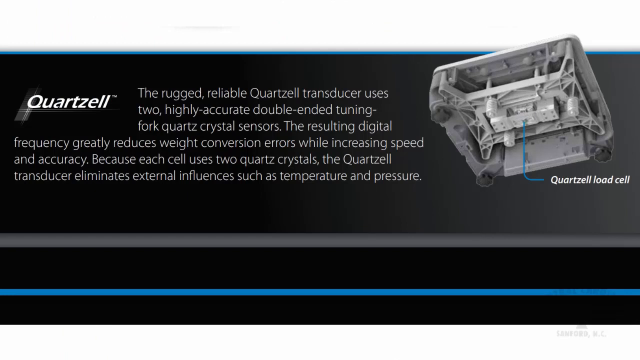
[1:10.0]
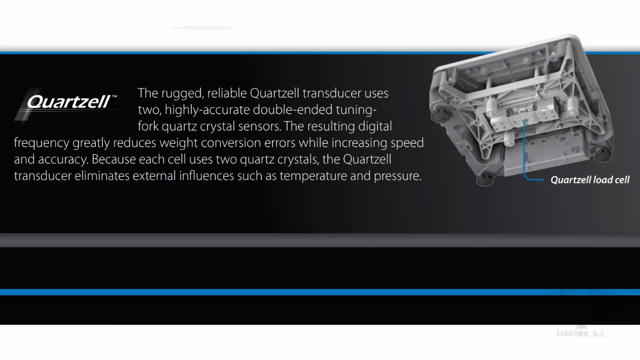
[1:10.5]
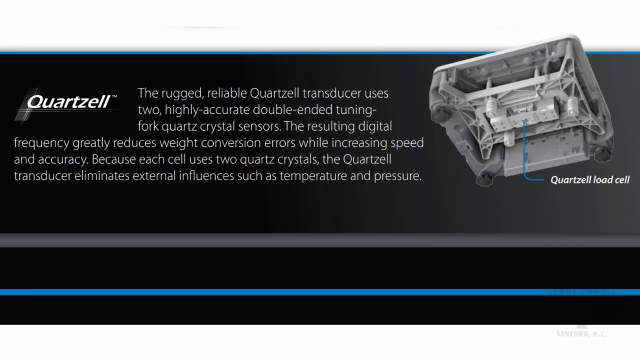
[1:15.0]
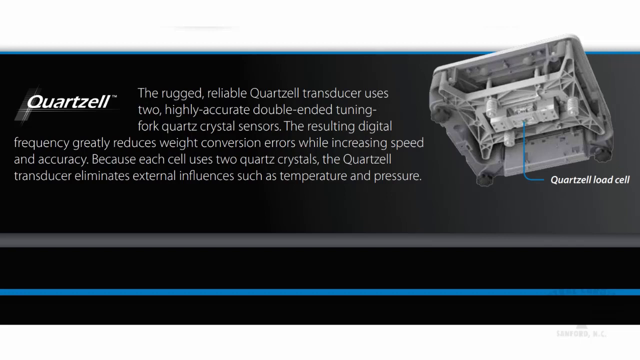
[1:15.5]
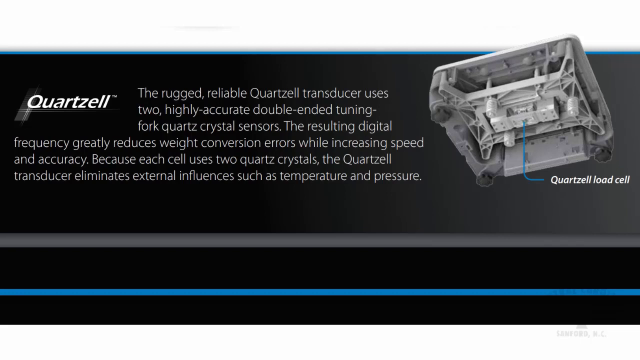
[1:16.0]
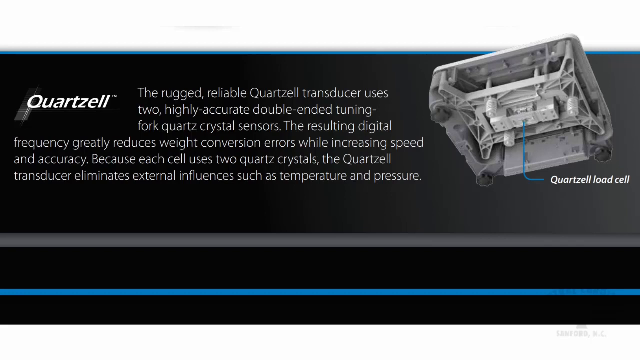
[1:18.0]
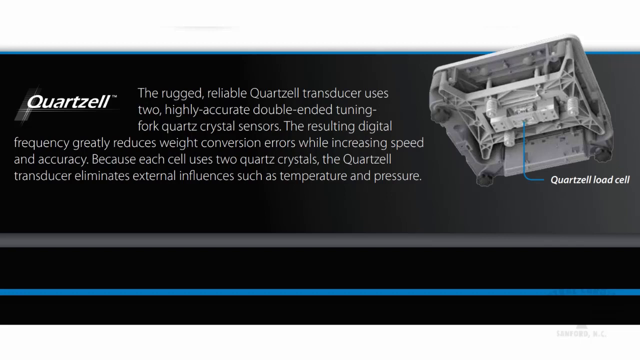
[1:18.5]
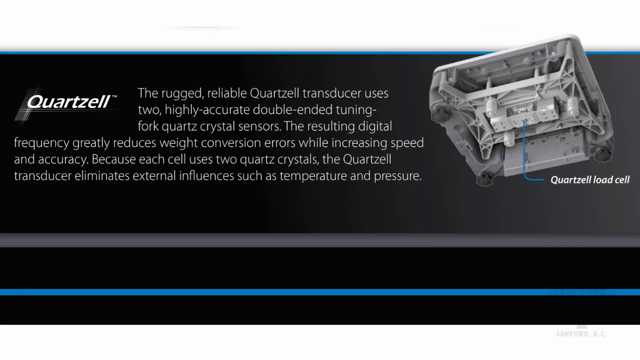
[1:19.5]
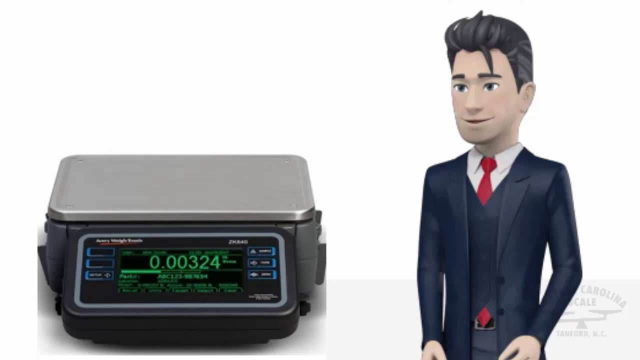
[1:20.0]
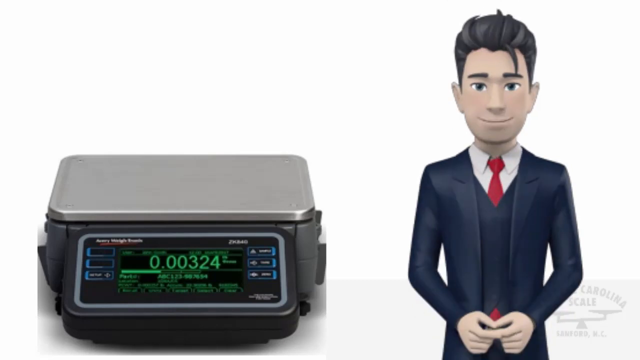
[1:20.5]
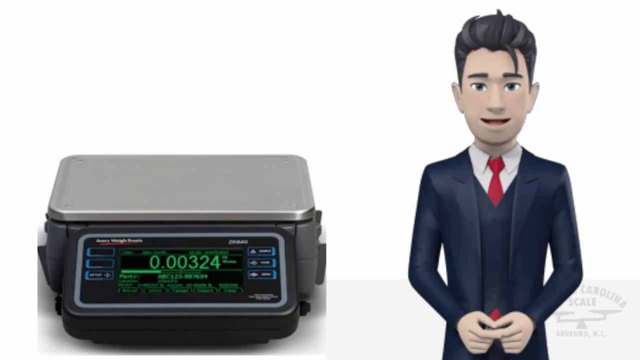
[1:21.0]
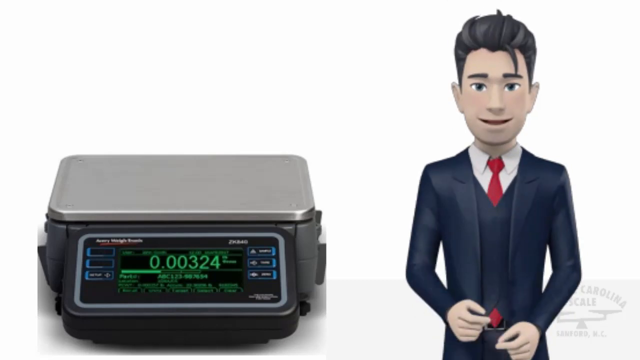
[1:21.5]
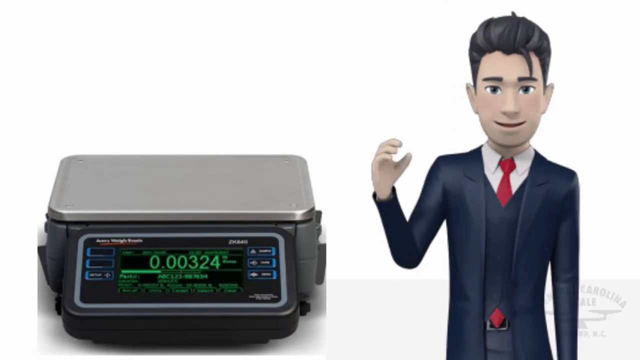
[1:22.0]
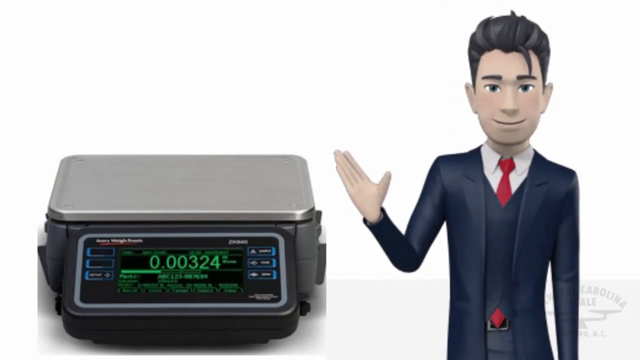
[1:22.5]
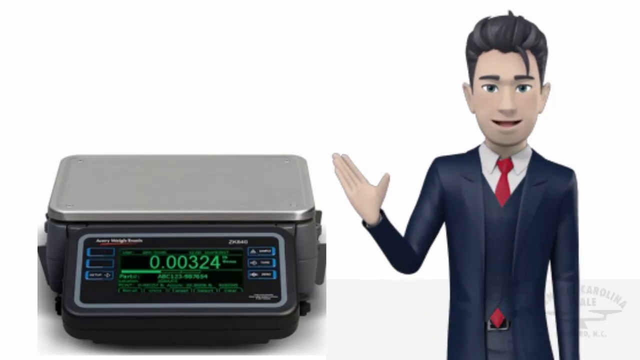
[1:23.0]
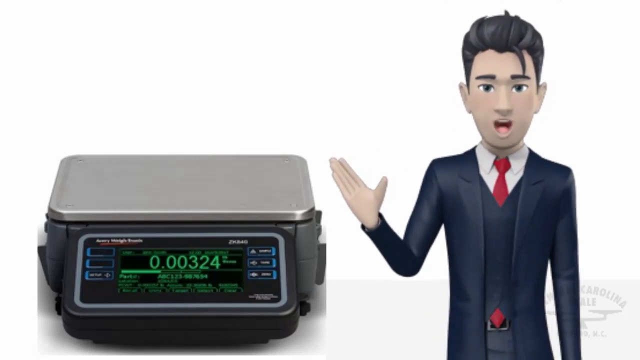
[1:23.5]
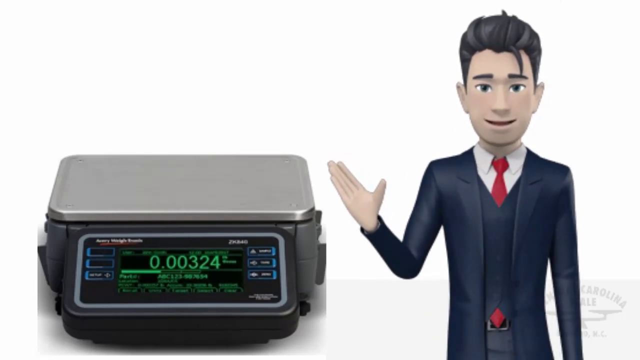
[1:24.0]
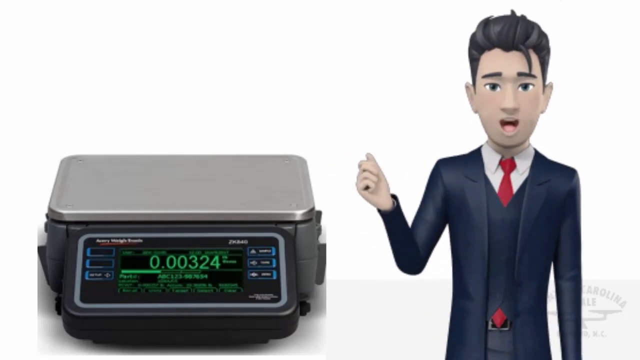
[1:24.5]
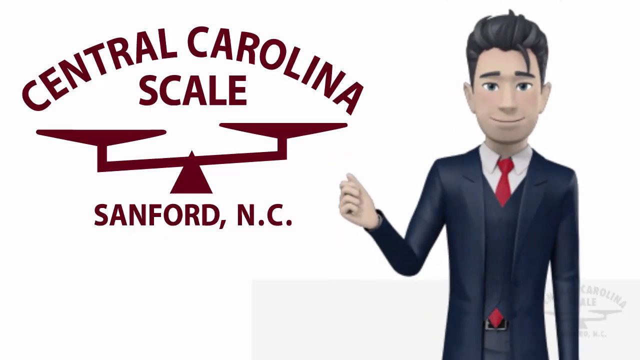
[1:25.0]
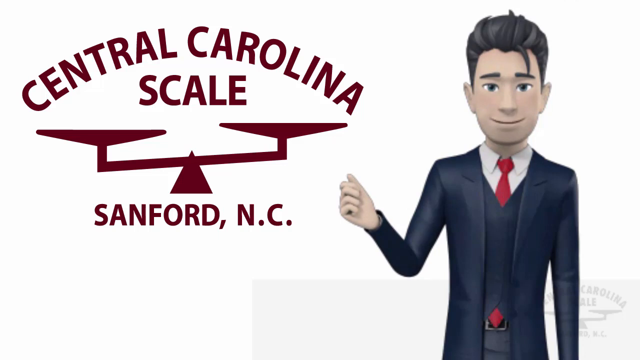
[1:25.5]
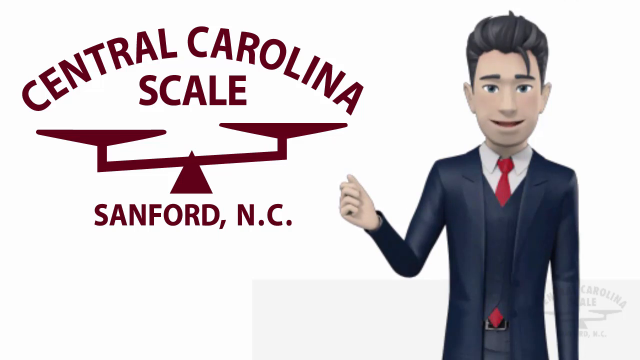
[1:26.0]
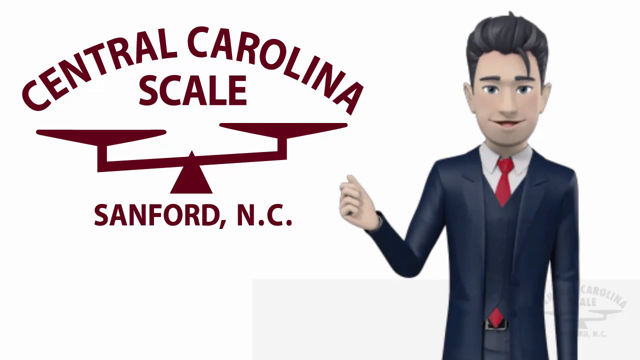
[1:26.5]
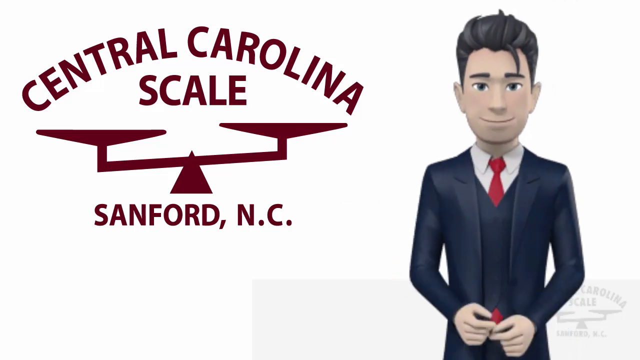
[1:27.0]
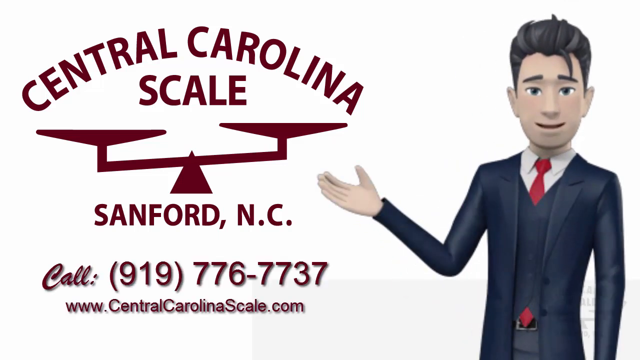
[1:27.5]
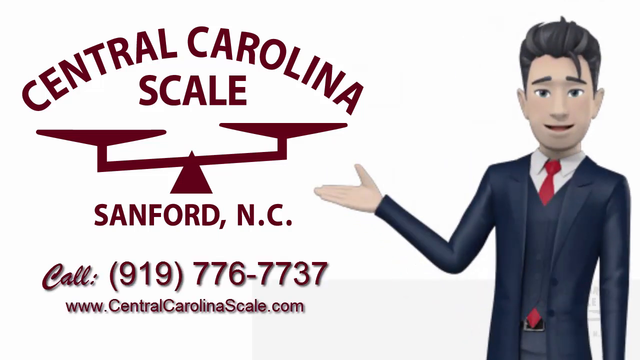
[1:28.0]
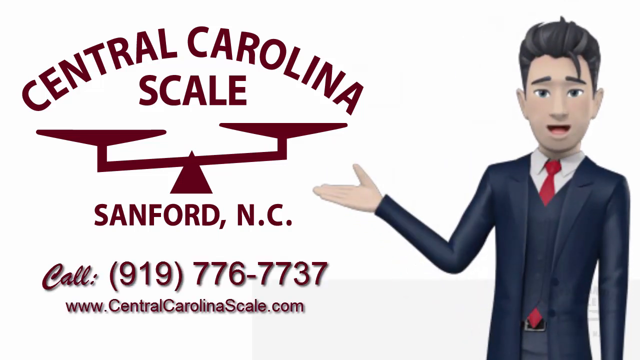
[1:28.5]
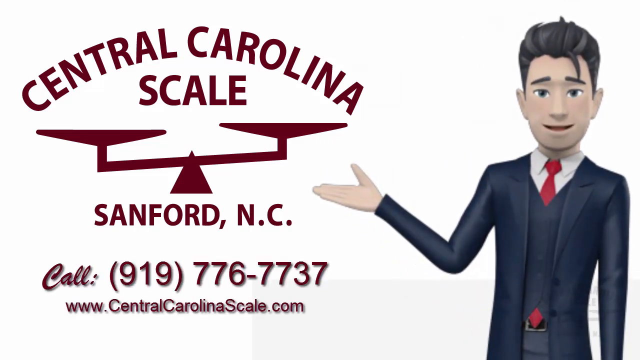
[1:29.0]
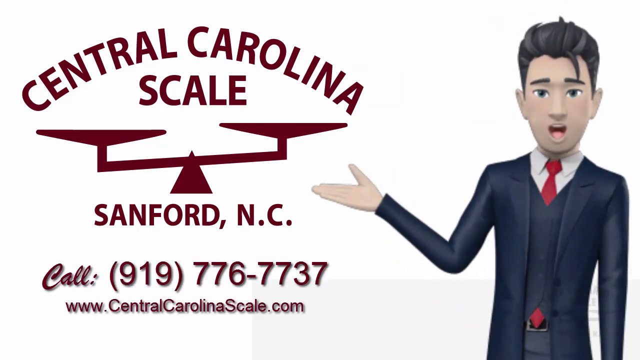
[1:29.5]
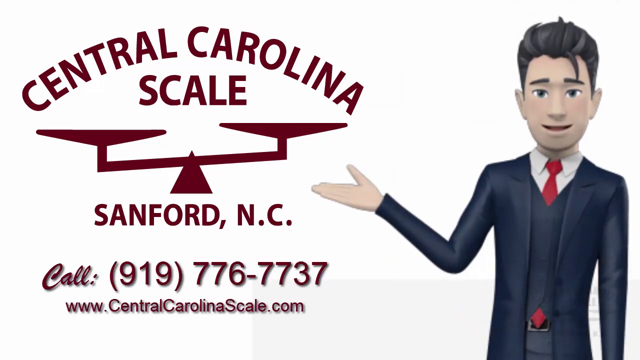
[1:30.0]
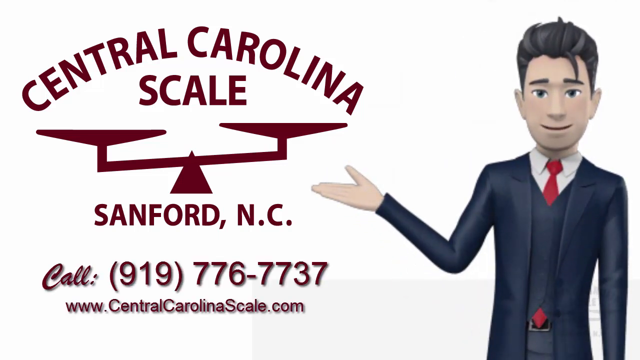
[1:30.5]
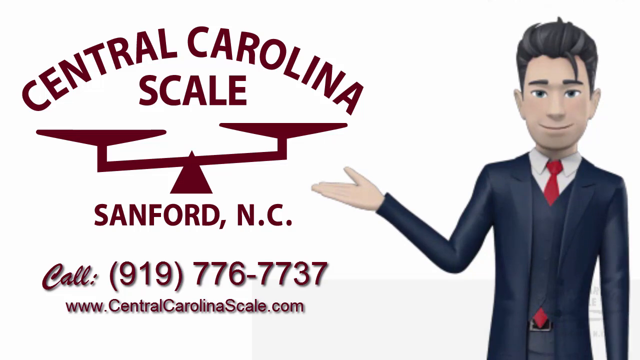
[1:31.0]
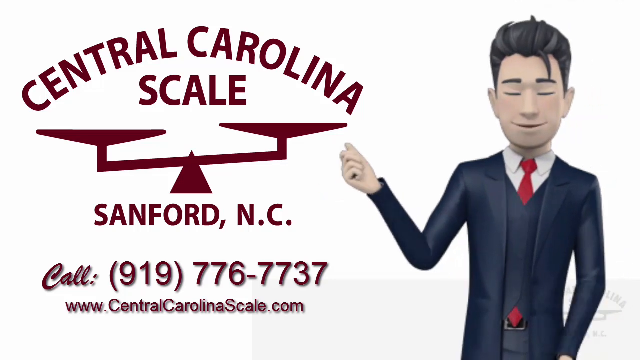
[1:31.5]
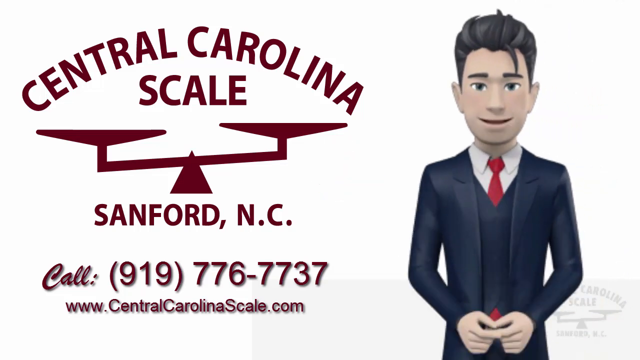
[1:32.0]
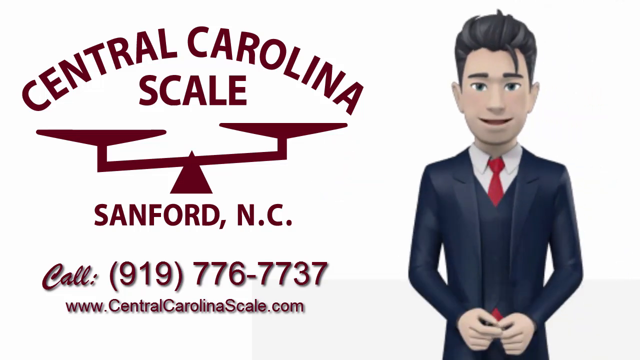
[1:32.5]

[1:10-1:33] On the screen is a product that the text says is a load cell, with an arrow pointing to the bottom of it and descriptive text appearing to its left. The video goes to a cartoon gentleman who is speaking. He has dark hair and wears a dark suit, a white shirt and a red tie. He stands to the right of one of the scales, points toward it and moves his hand toward it. Afterwards the screen shows "Central Carolina Scale Sanford North Carolina" with an image of a scale, all in red, and he points toward it again. A number appears reading "call 919-776-7737," along with a website to visit, "centralcarolinascale.com." The white background makes the colors and the phone number stand out and easier to read.